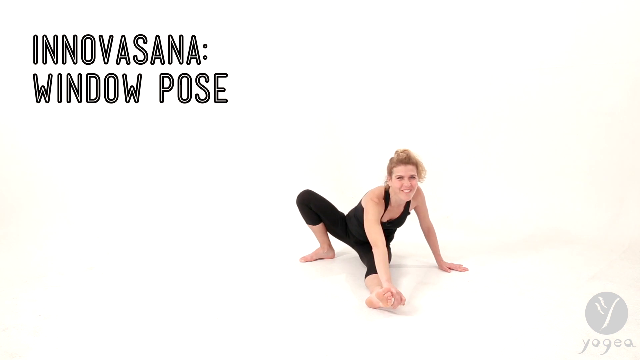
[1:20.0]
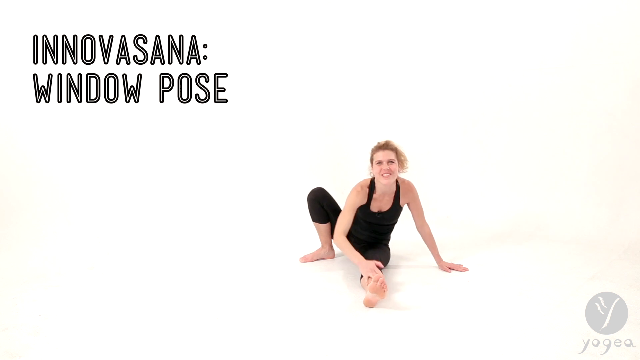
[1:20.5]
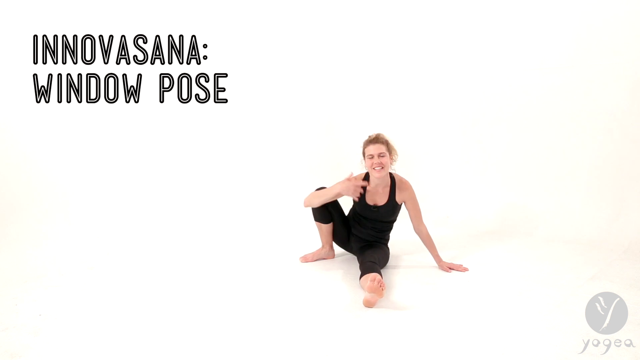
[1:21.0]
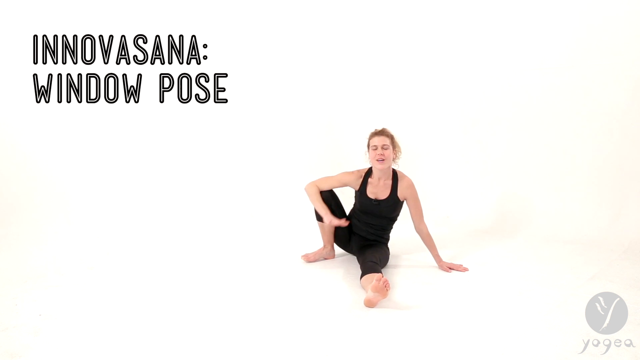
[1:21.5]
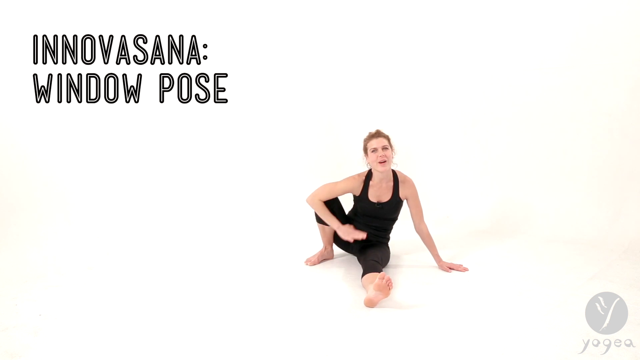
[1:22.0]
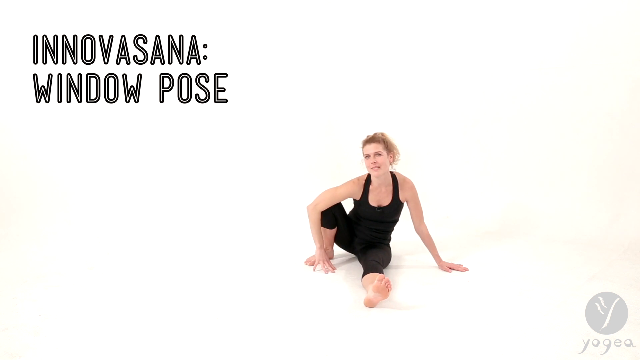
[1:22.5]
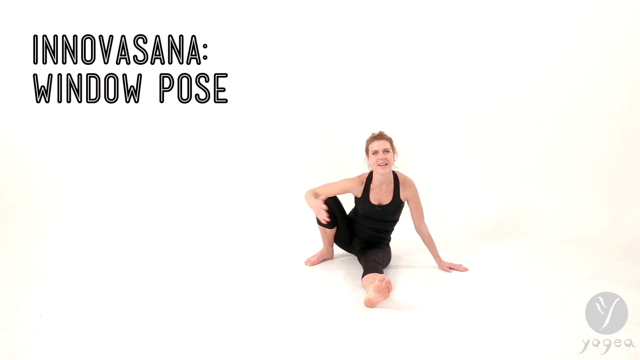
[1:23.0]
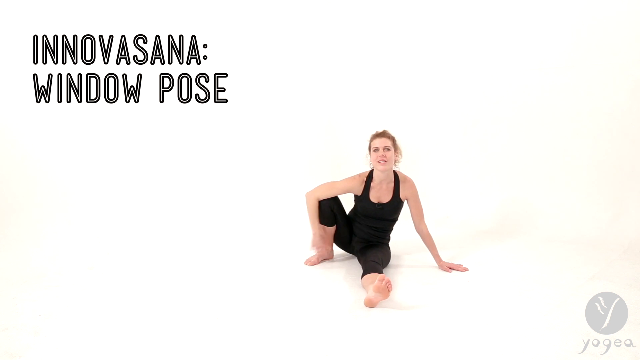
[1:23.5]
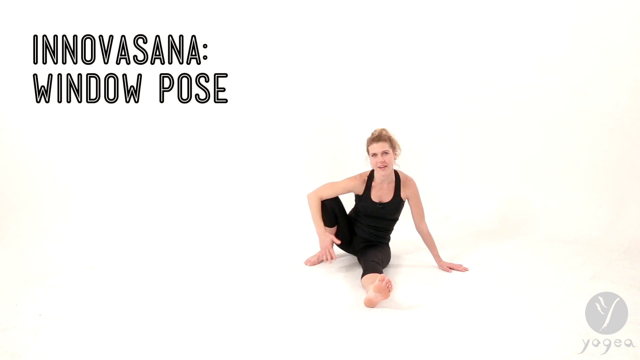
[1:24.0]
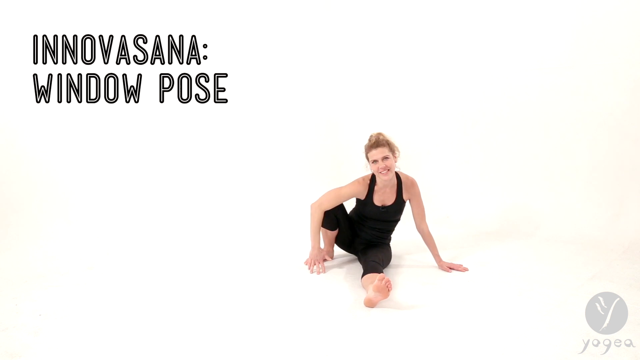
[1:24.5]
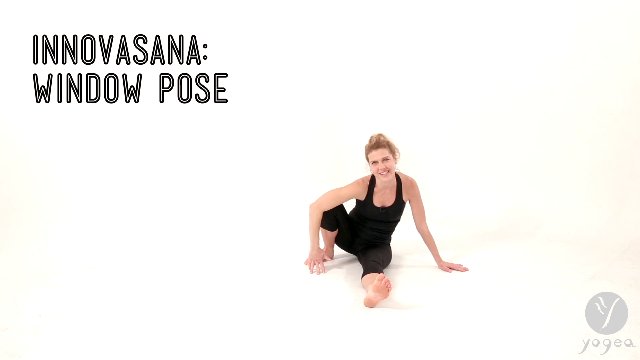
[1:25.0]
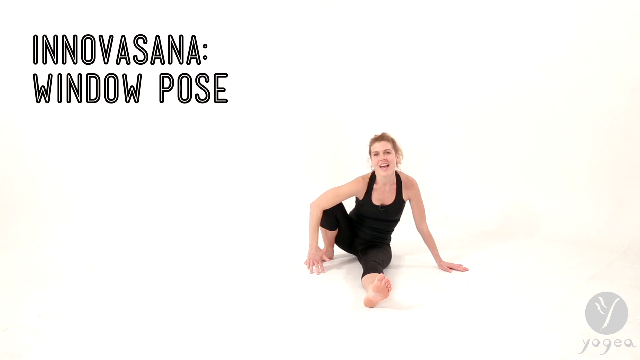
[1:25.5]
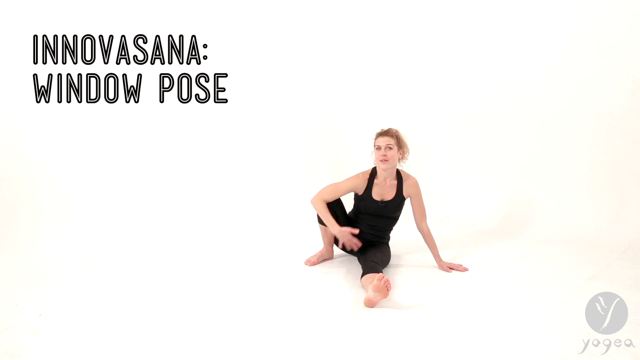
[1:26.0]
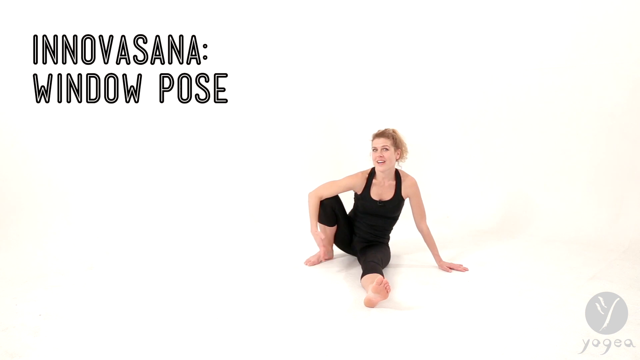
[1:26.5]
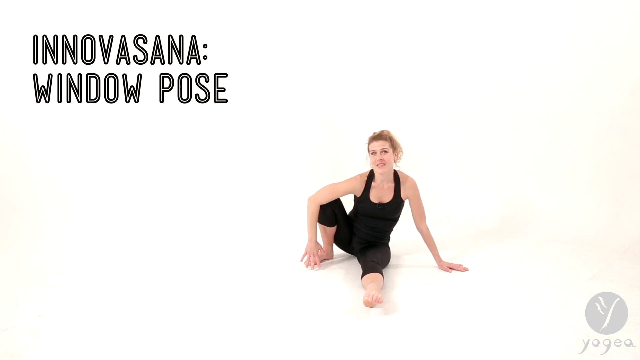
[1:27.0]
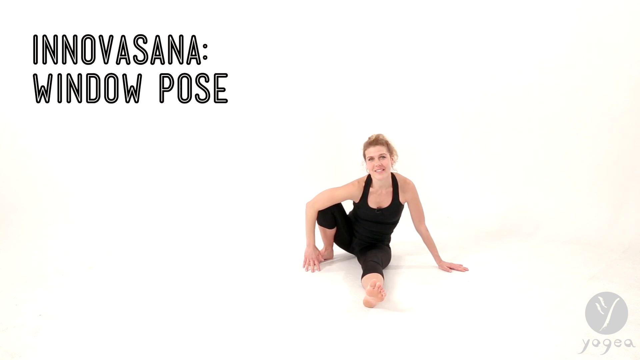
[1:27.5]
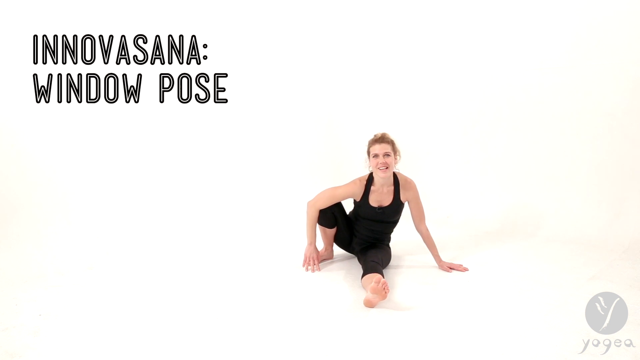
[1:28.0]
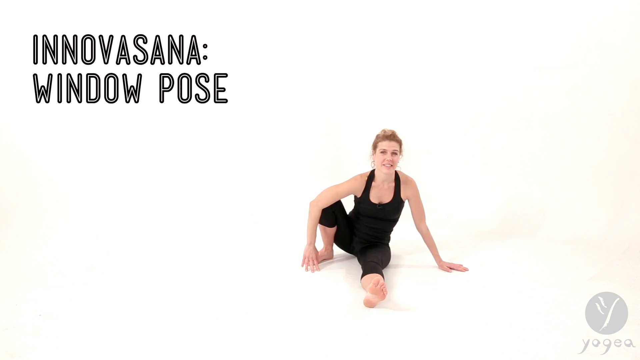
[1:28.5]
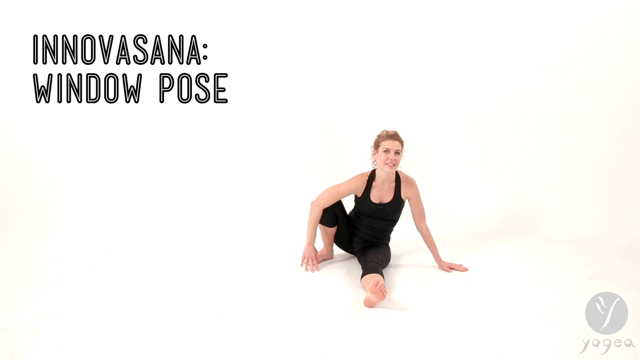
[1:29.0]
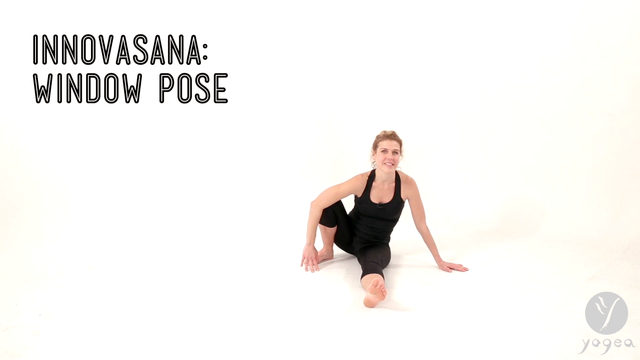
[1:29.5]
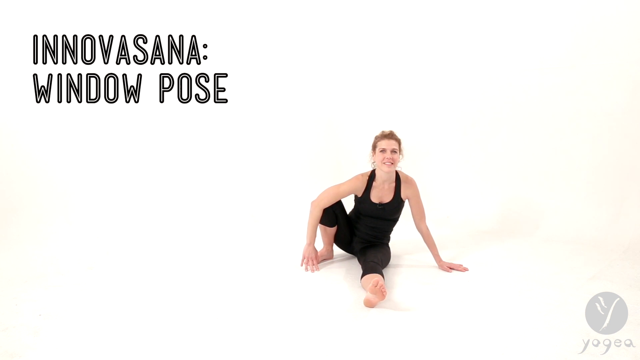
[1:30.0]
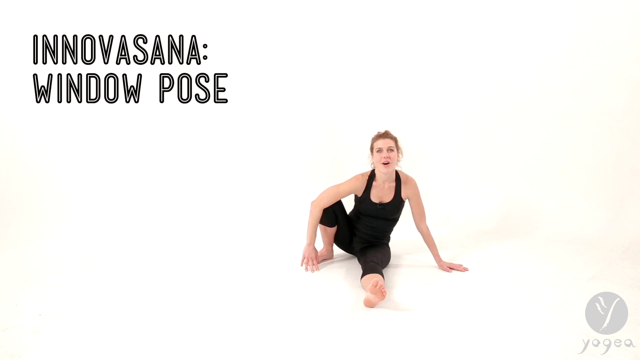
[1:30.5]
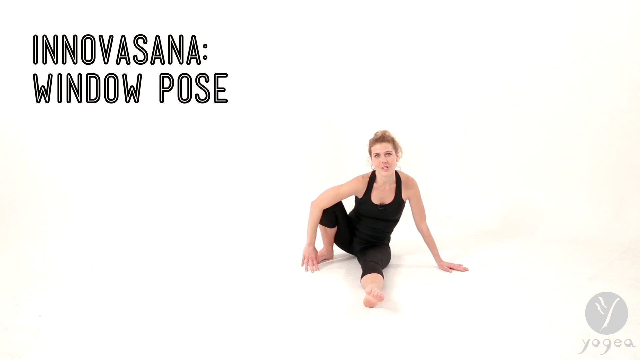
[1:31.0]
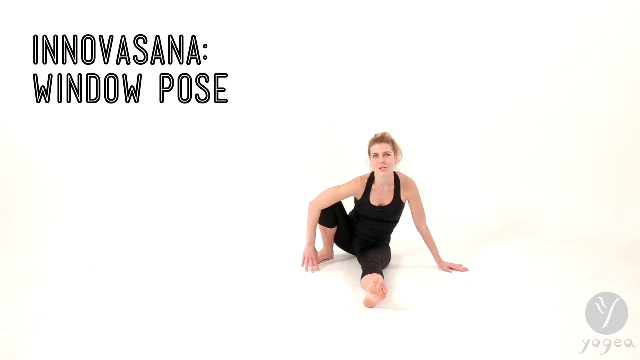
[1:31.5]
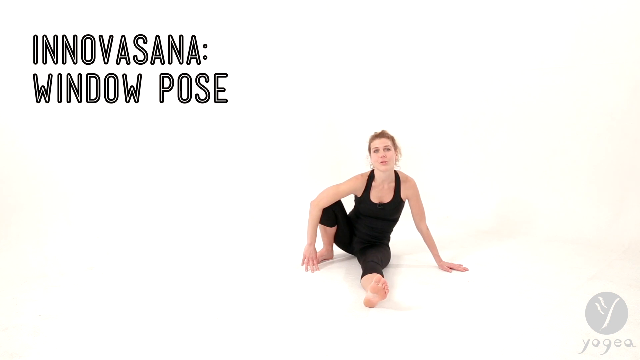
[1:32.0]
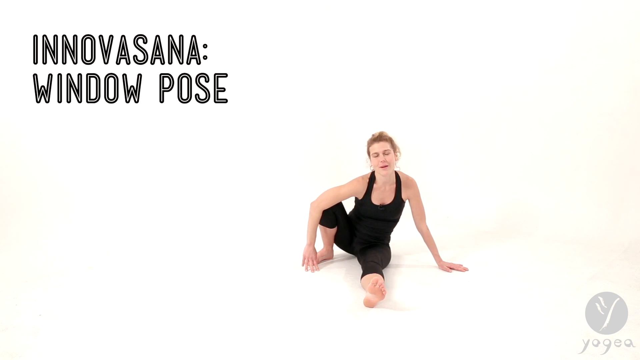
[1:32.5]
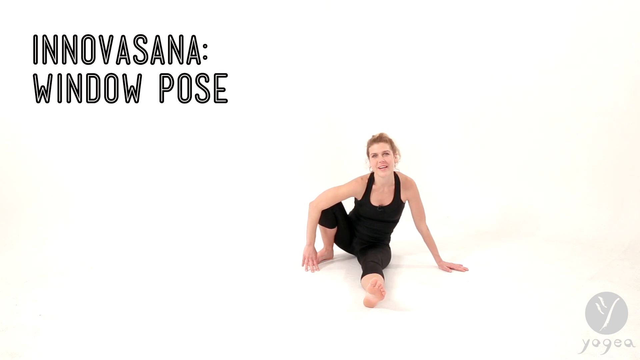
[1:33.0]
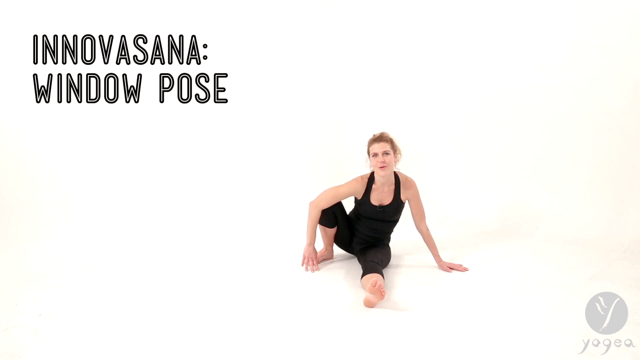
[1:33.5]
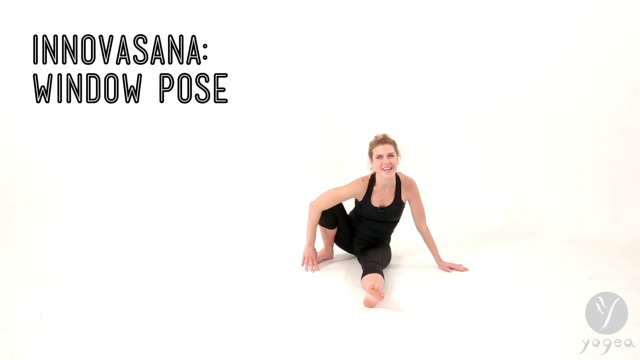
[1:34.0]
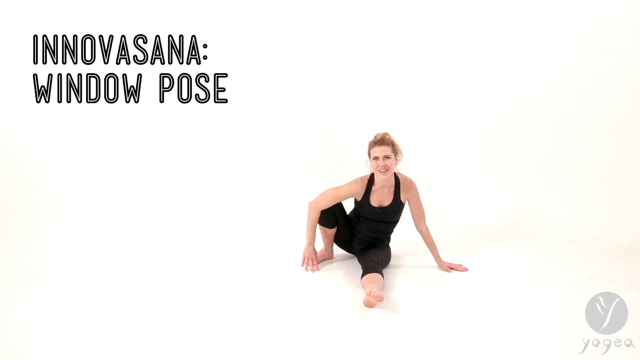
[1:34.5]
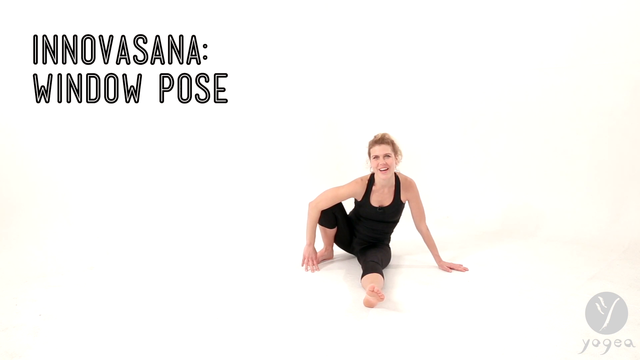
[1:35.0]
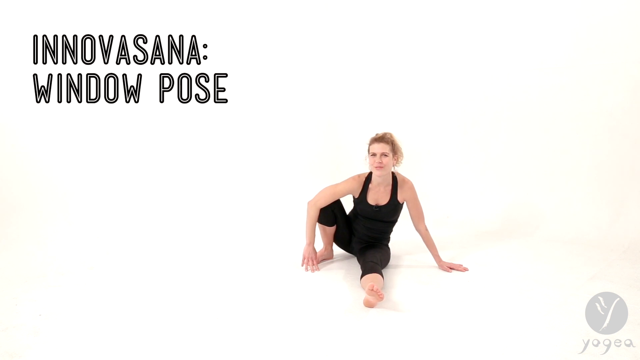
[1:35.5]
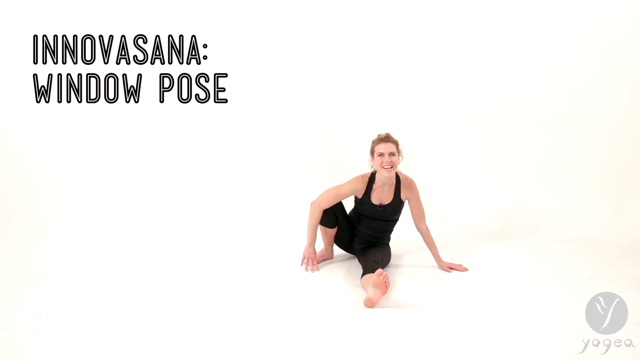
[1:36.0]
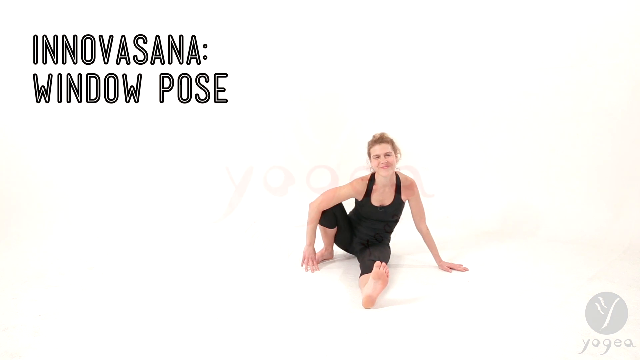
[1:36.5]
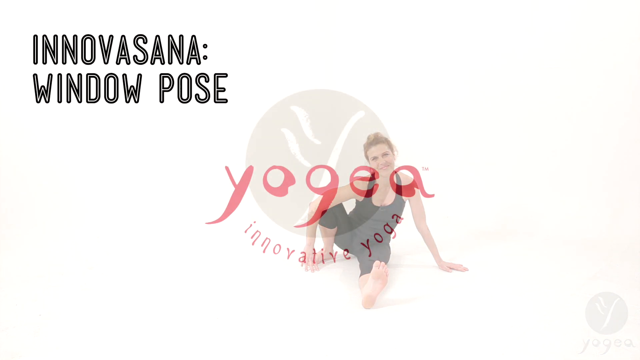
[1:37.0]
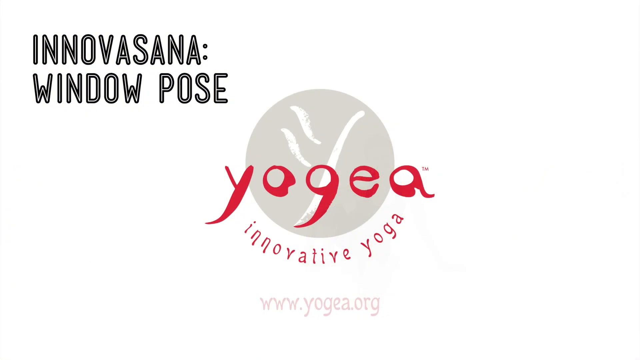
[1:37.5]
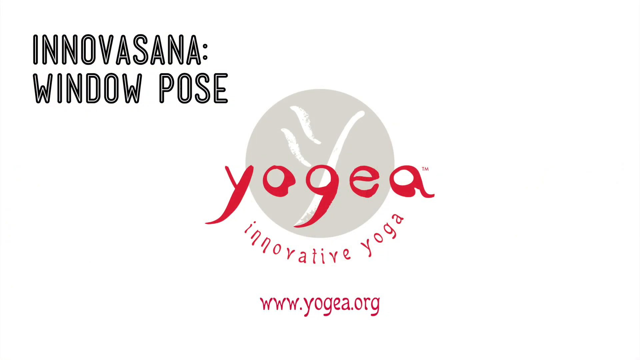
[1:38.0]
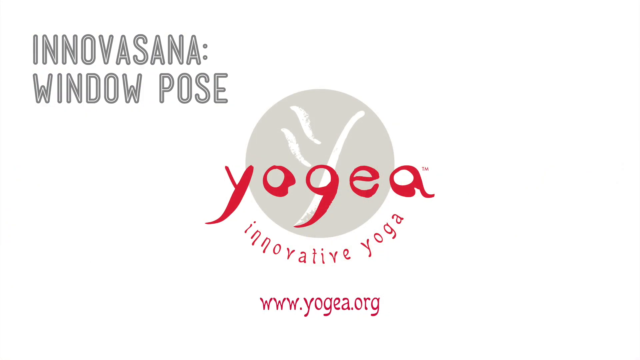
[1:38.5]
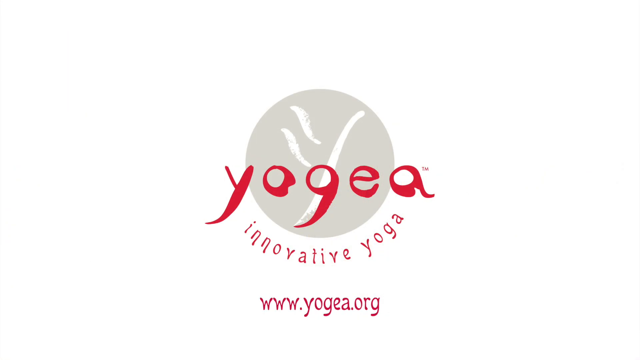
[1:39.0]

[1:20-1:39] A woman is seated on the floor, wearing a black halter-neck top leotard, her blonde hair pulled up into a messy bun over her head. Her left leg is stretched out in front of her while her right leg is bent at the knee, with a palm placed flat on the floor. Her left hand also supports her body, palm flat on the floor. She speaks, gesturing with her right hand, her right elbow bent and supported on her right knee, and gently moves her head as she talks. She smiles the whole time. In the upper left corner of the screen are the words "Innovasana: Window Pose". She continues to speak and smile, looking relaxed. The video ends with a round beige logo with the word "yogea" written across it and the website written below: "www.yogea.org".